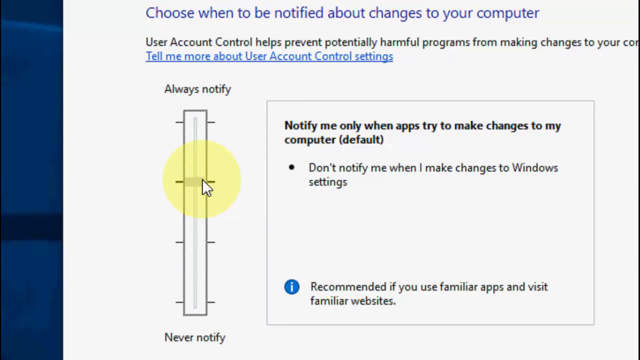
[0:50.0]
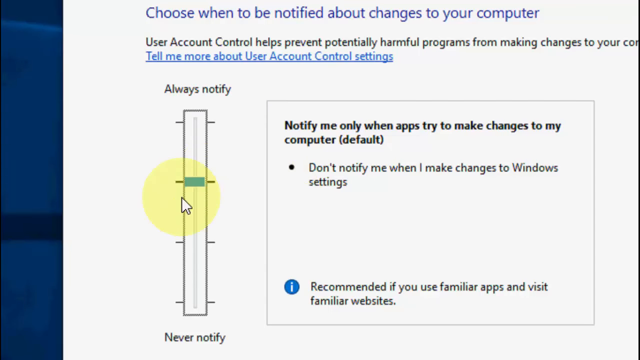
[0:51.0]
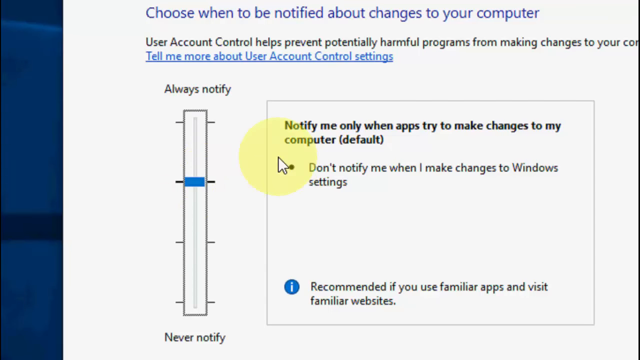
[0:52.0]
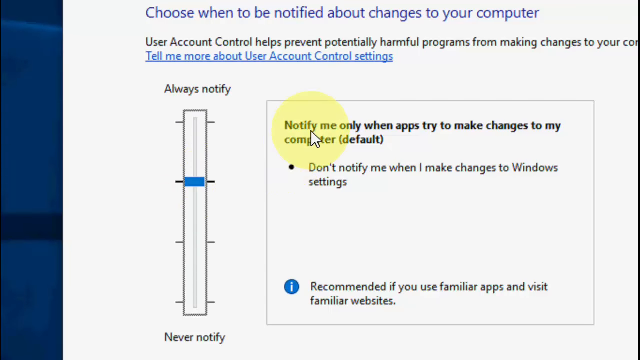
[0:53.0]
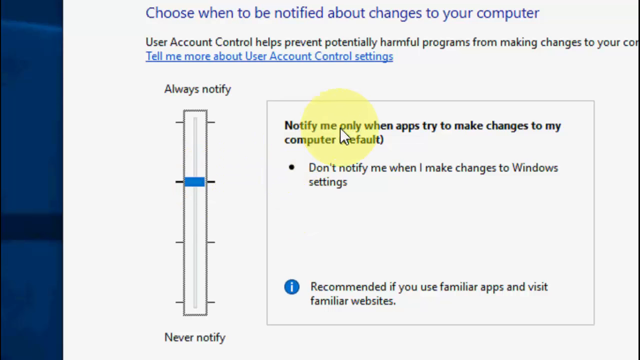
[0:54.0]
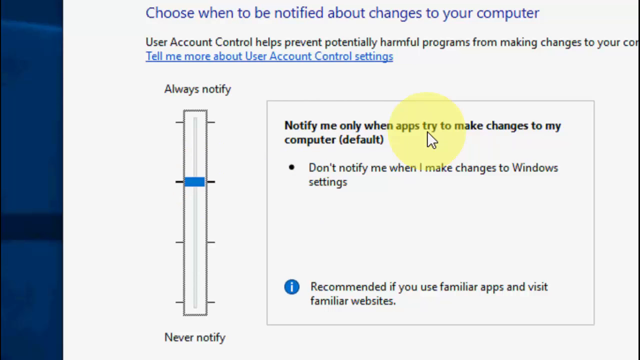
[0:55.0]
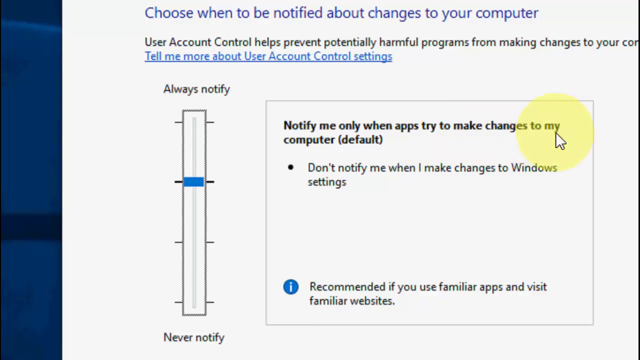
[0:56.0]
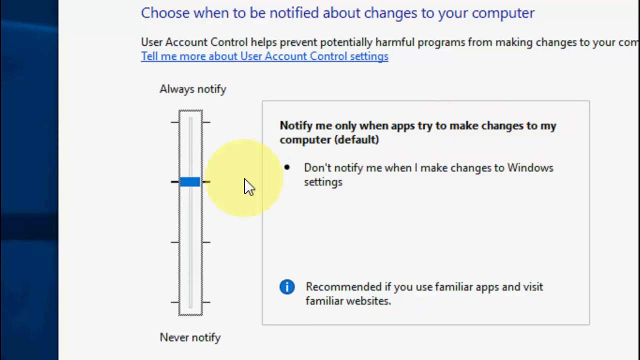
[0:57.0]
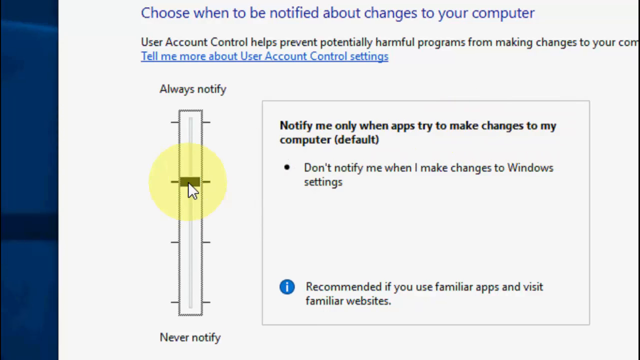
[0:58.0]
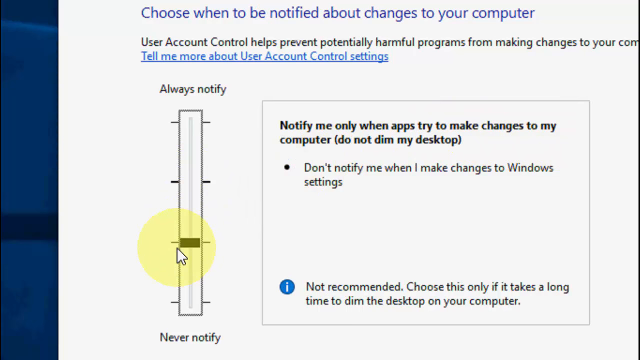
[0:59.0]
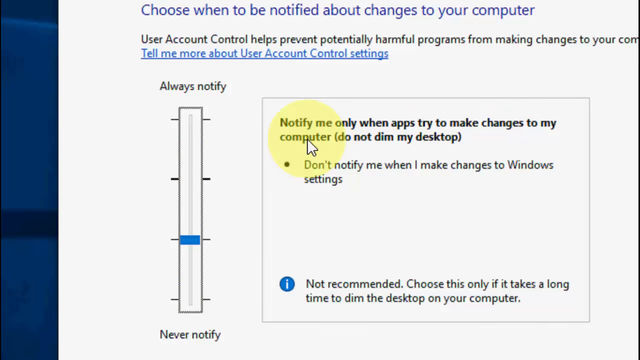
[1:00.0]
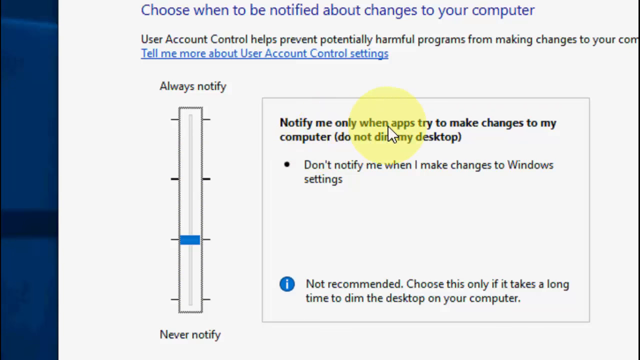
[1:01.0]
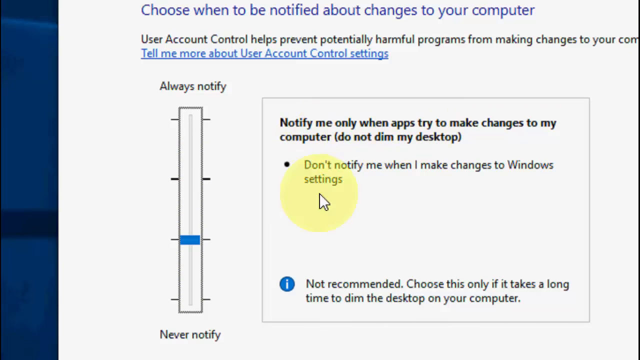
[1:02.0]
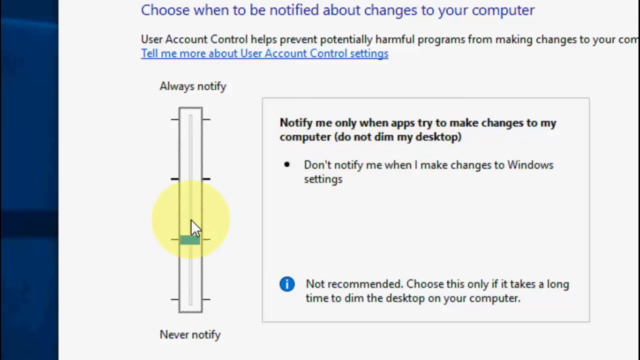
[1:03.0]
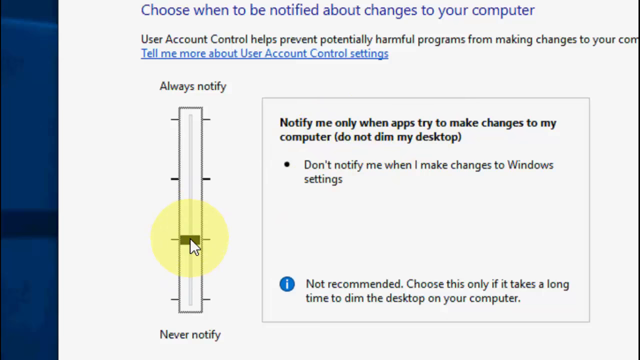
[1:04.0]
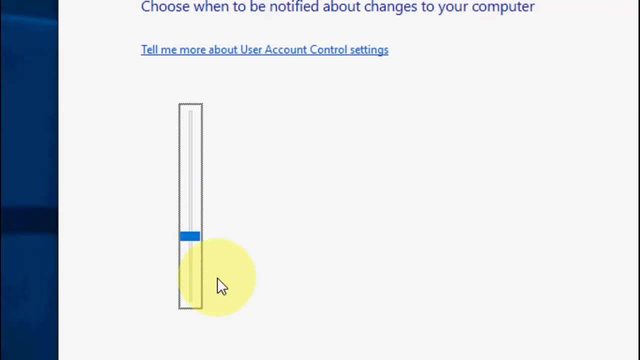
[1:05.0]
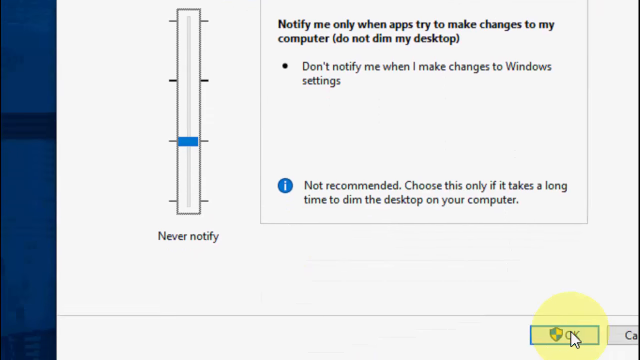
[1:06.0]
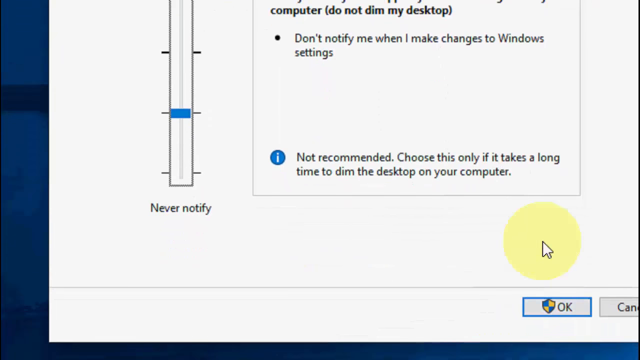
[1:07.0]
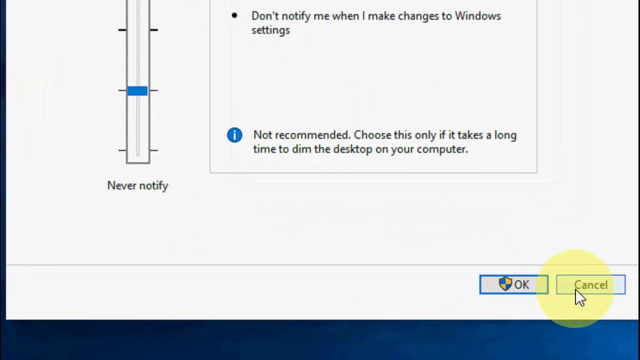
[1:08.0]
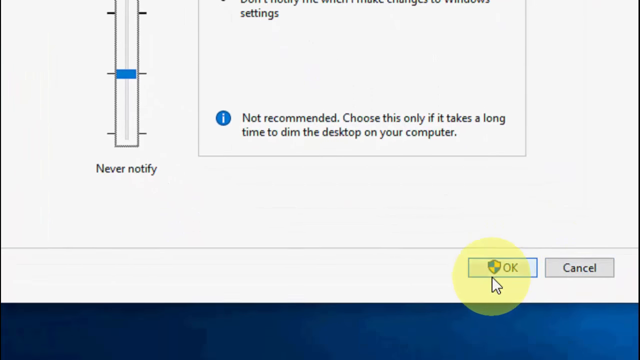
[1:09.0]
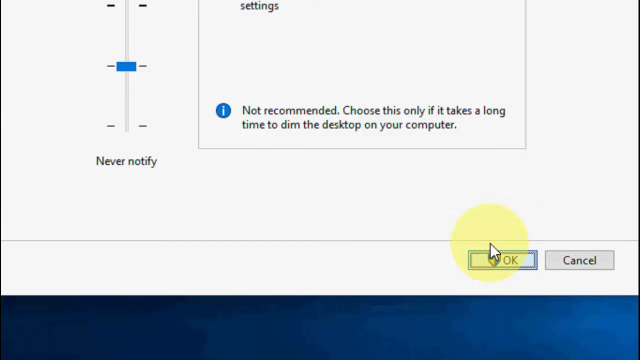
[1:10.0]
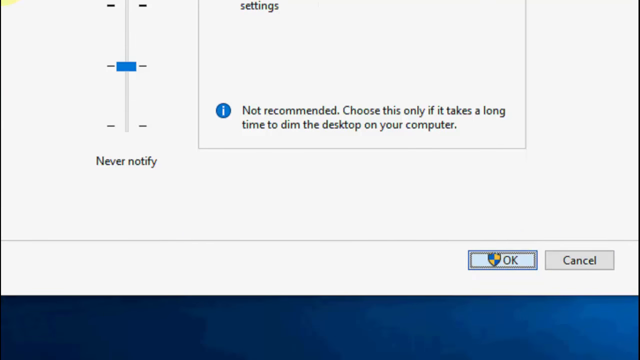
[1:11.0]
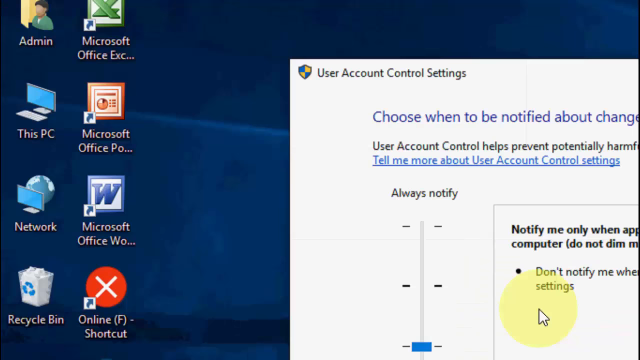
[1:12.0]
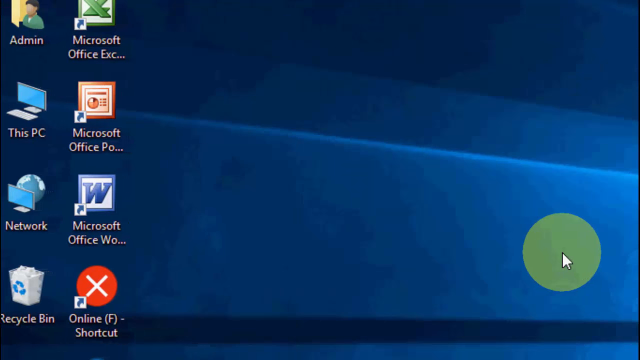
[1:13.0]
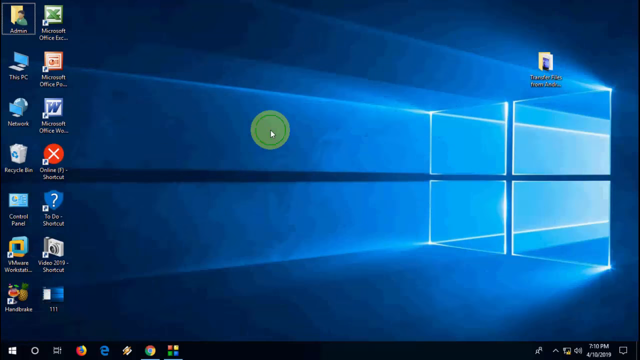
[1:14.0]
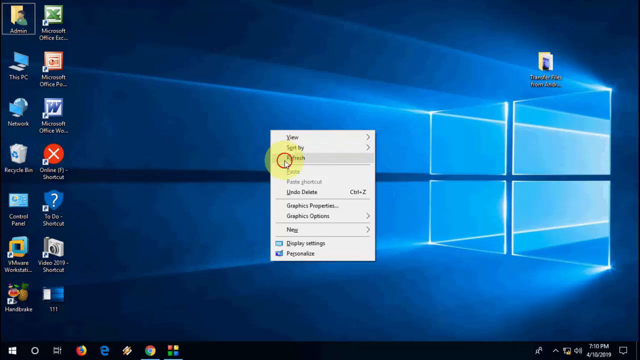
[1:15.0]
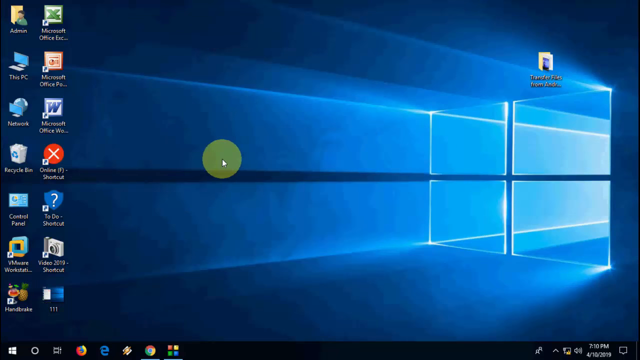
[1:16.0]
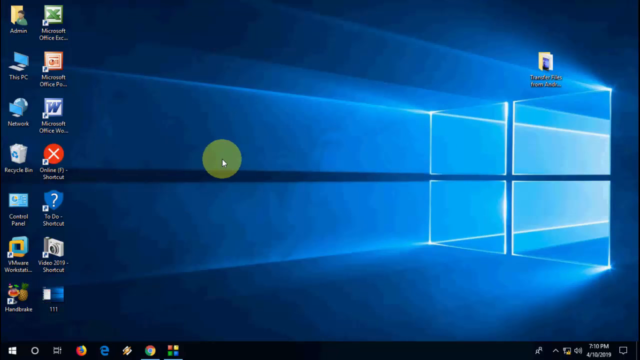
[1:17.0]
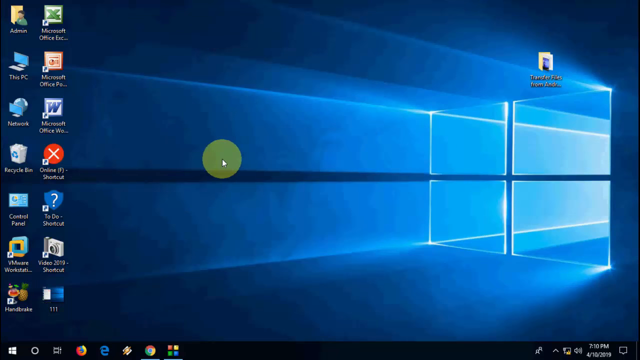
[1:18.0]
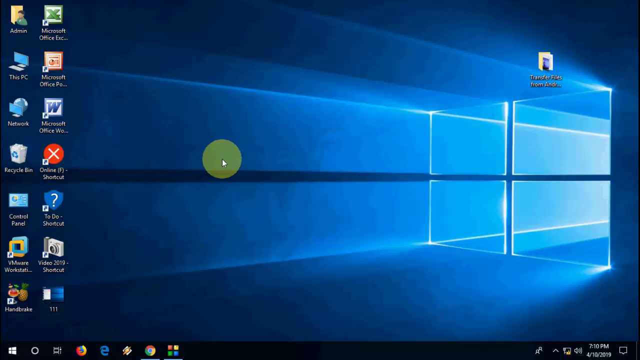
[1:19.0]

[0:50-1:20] A settings page reads at the top "choose when to be notified about changes to your computer," and below that "user account control helps prevent potentially harmful programs from making changes to your computer." Someone uses a cursor with a see-through yellow circle around it, which looks like a highlighter. The person clicks on "notify me only when apps try to make changes to my computer," goes to the scale on the left, and moves the setting to that option. The cursor, with its yellow circle, moves to the bottom of the page, hovers over the OK tab, and clicks it. The video returns to the Windows screensaver with its four panes and light shining from the back outward; this desktop has 12 shortcuts.